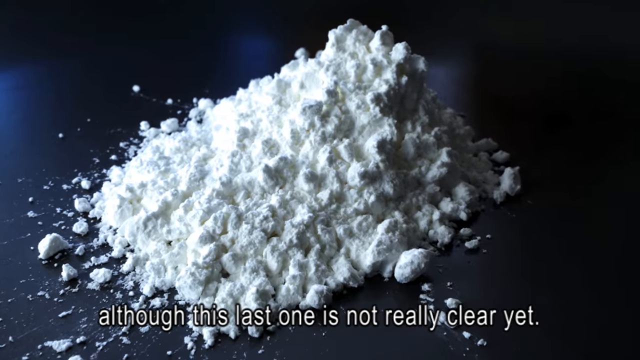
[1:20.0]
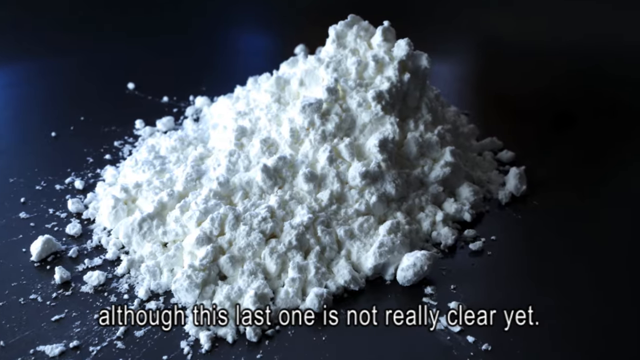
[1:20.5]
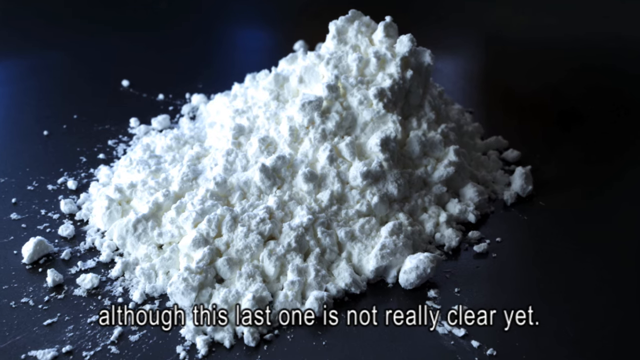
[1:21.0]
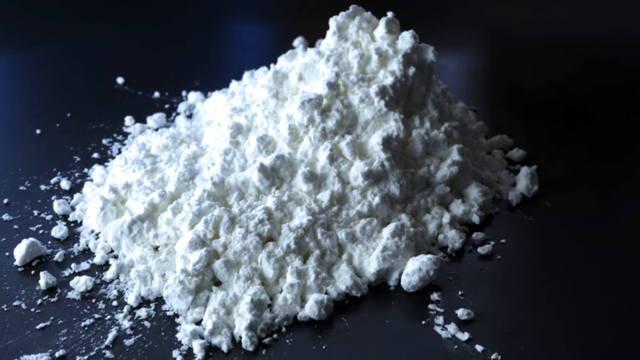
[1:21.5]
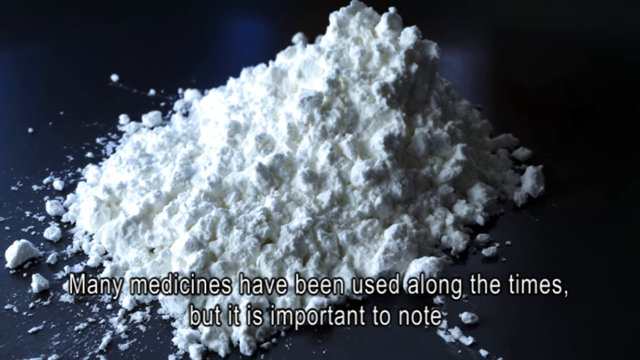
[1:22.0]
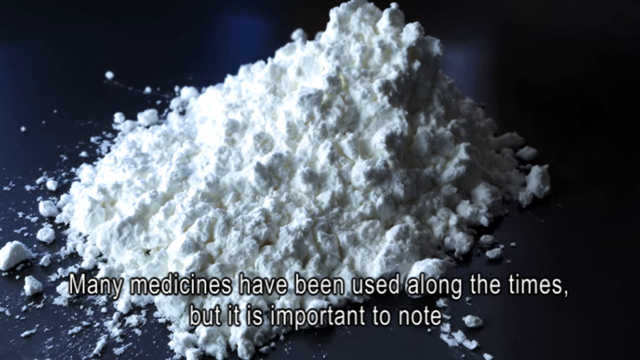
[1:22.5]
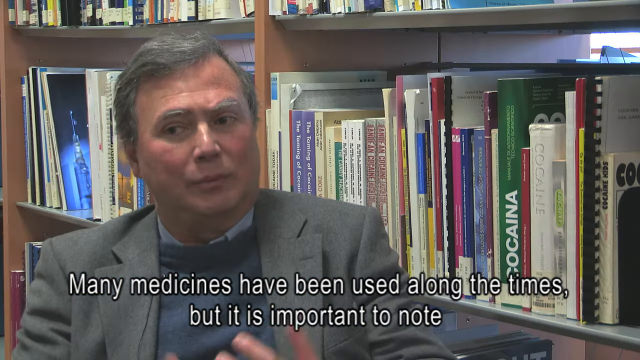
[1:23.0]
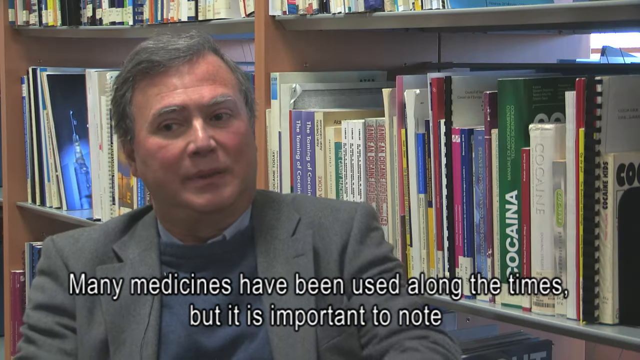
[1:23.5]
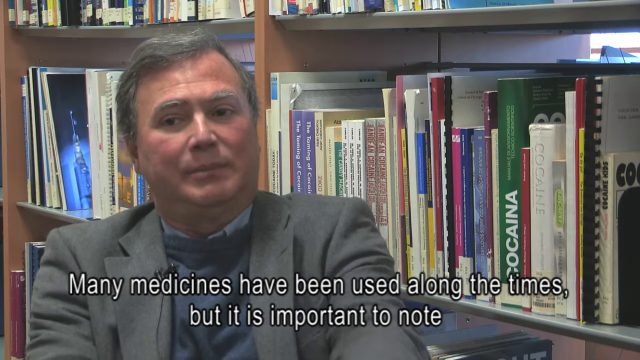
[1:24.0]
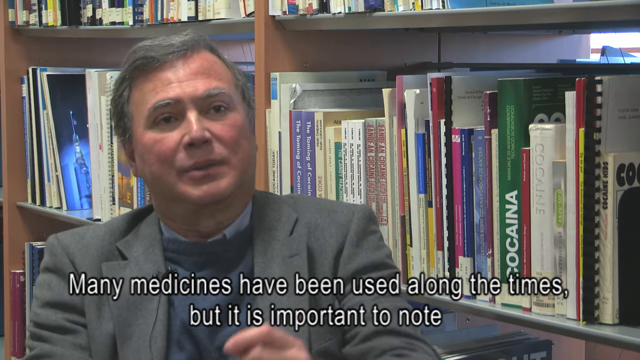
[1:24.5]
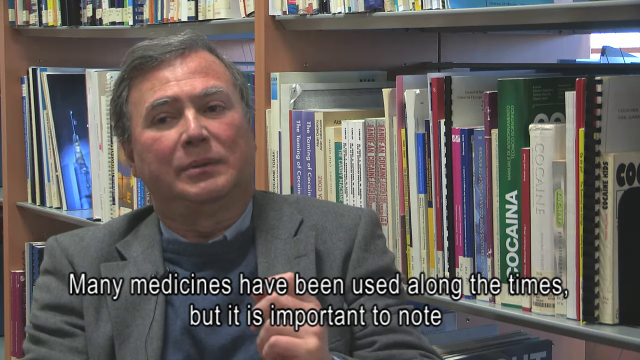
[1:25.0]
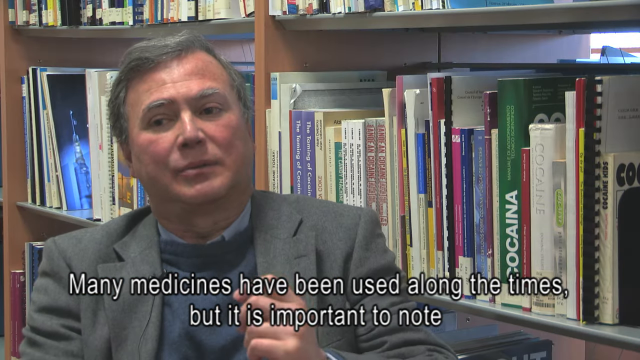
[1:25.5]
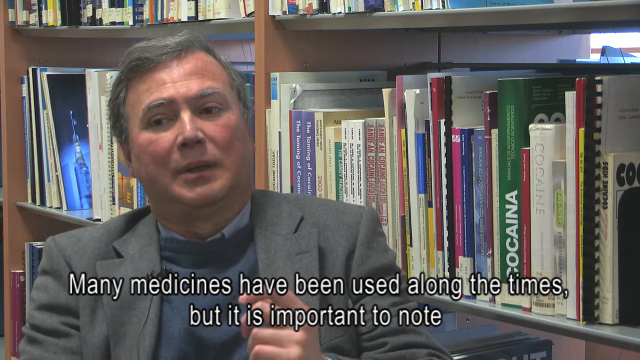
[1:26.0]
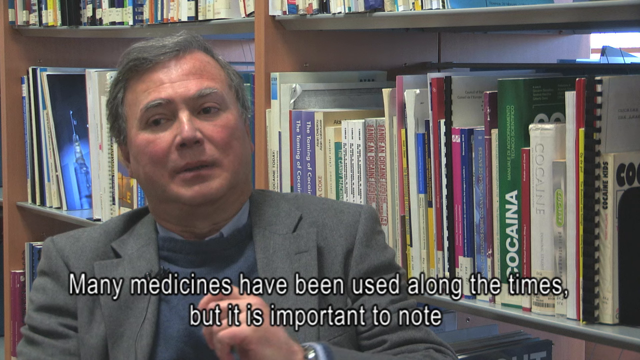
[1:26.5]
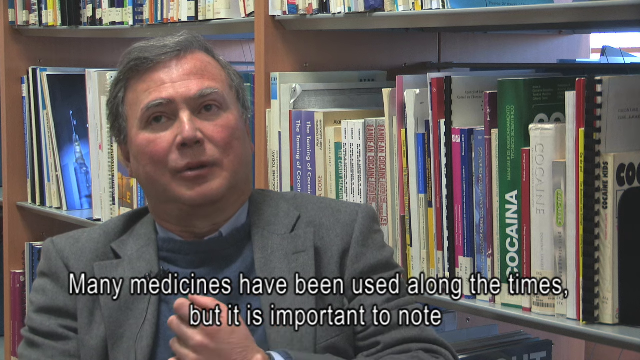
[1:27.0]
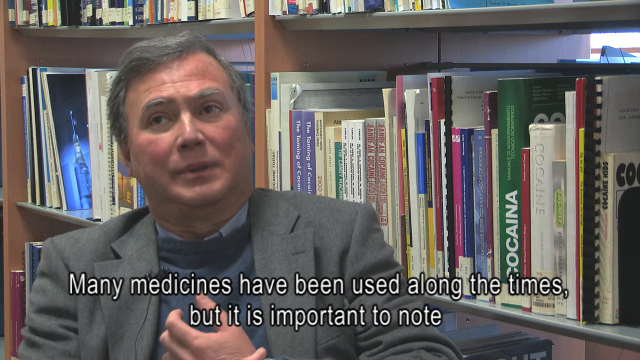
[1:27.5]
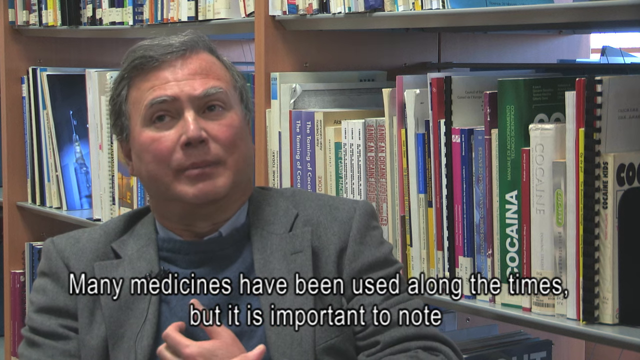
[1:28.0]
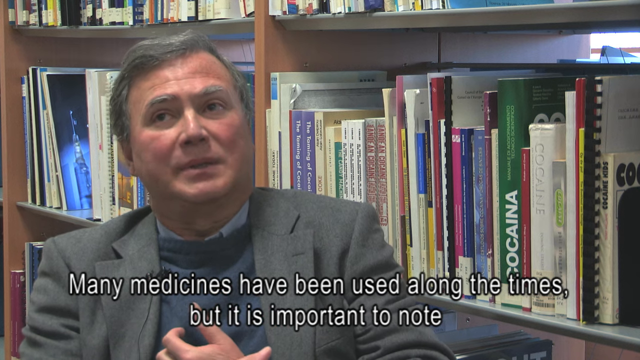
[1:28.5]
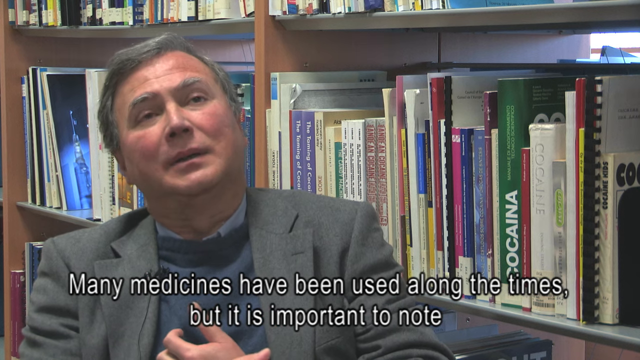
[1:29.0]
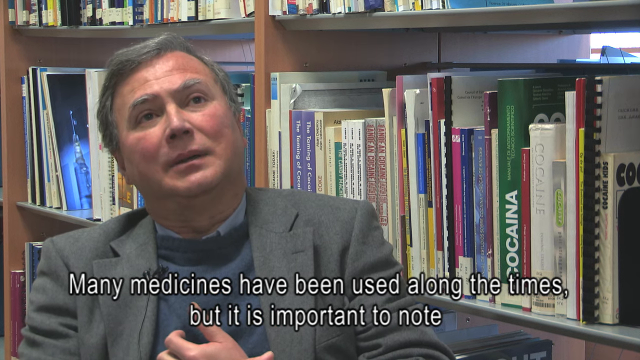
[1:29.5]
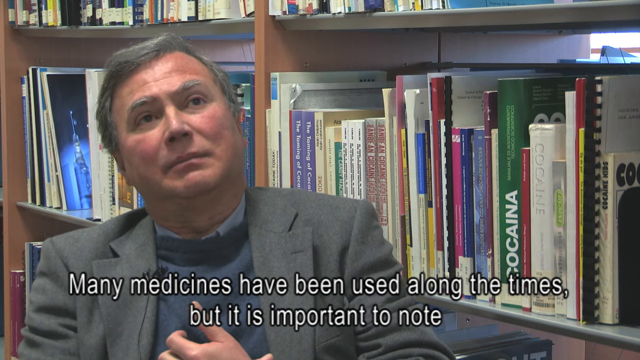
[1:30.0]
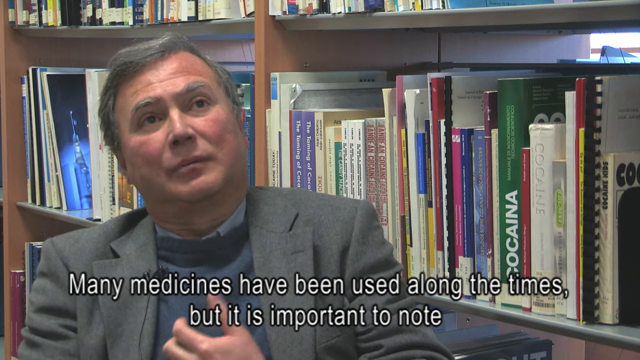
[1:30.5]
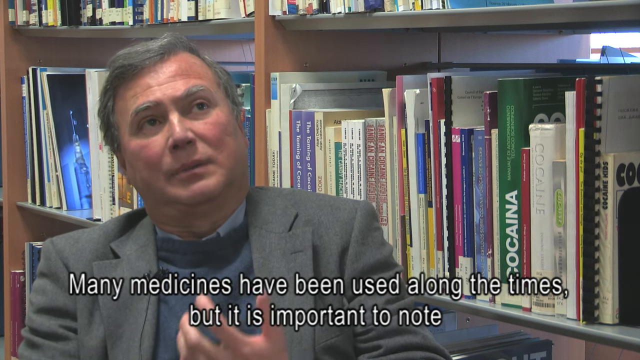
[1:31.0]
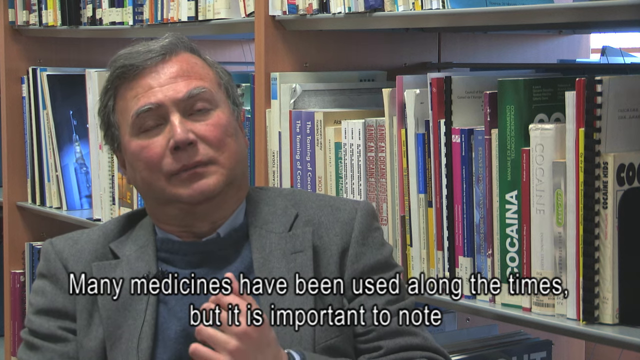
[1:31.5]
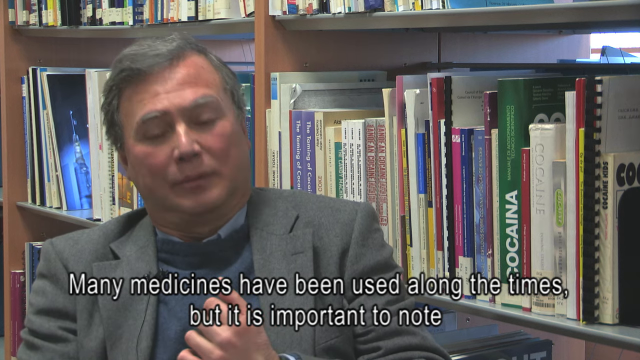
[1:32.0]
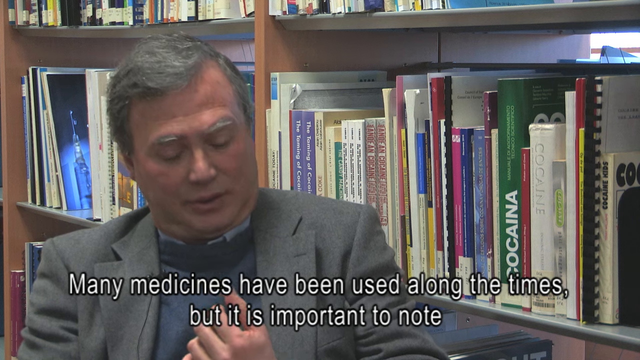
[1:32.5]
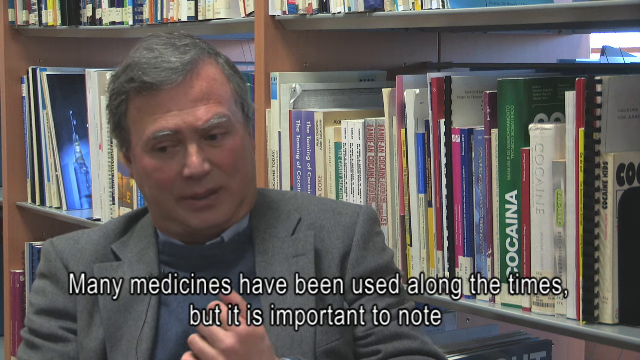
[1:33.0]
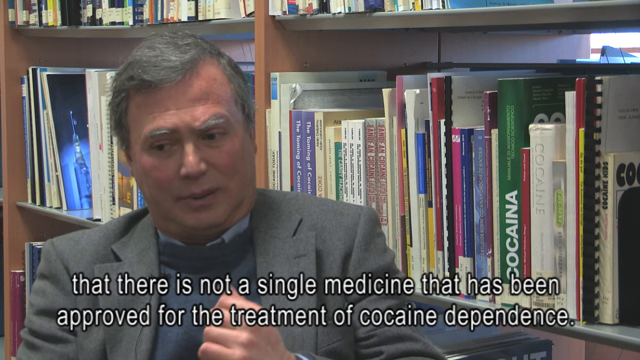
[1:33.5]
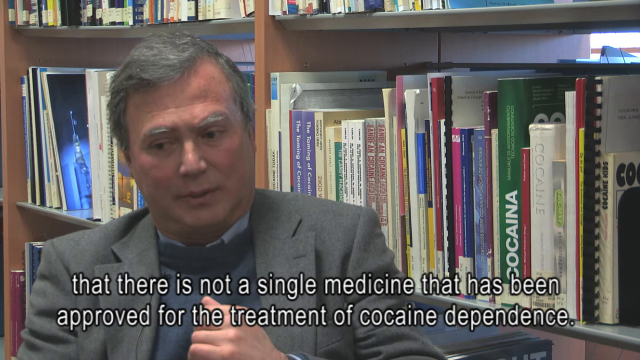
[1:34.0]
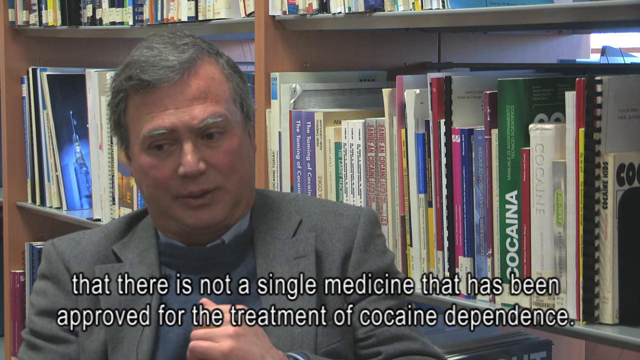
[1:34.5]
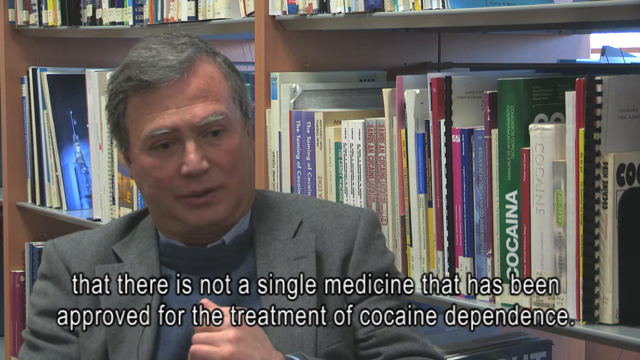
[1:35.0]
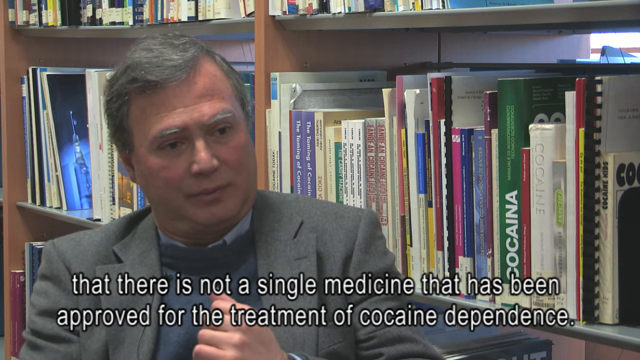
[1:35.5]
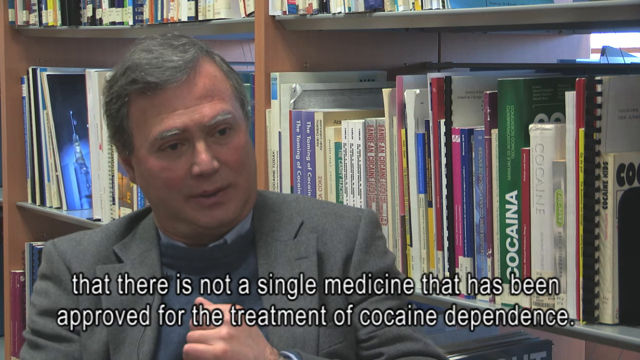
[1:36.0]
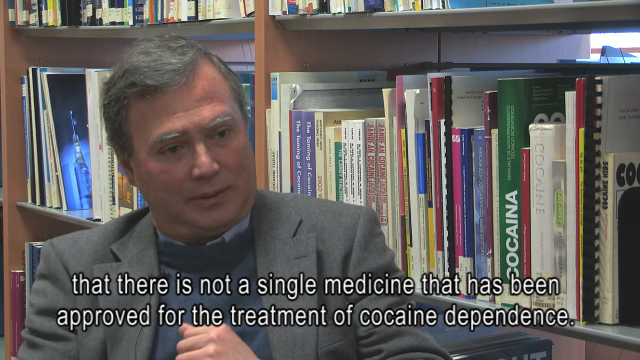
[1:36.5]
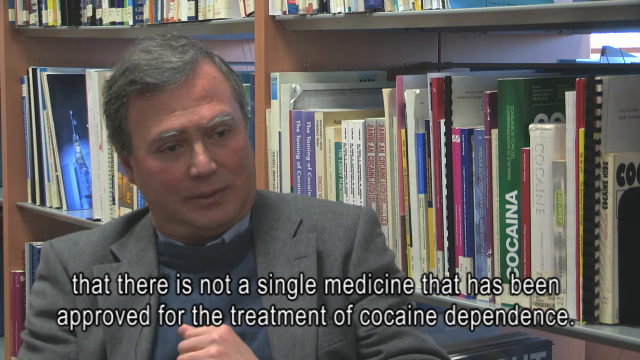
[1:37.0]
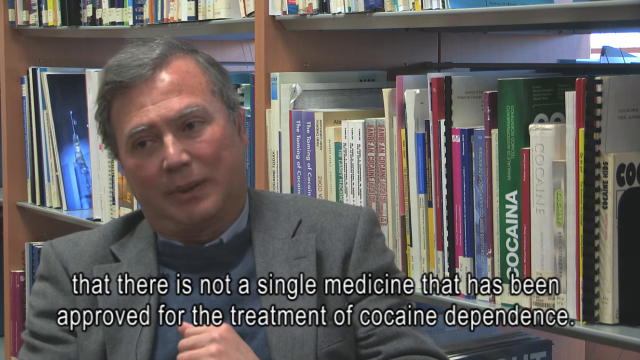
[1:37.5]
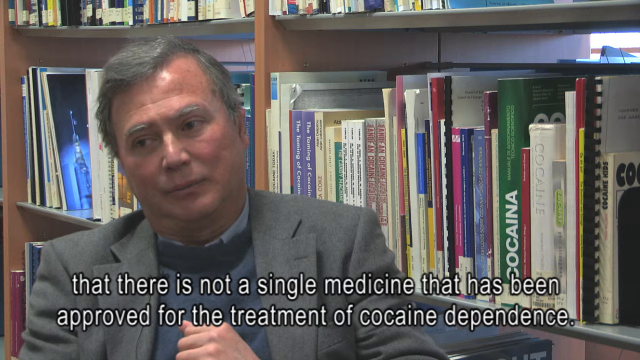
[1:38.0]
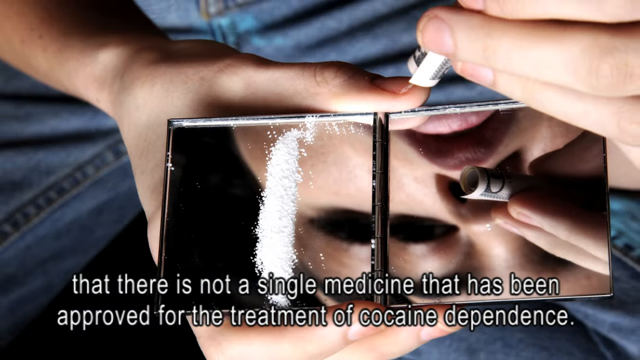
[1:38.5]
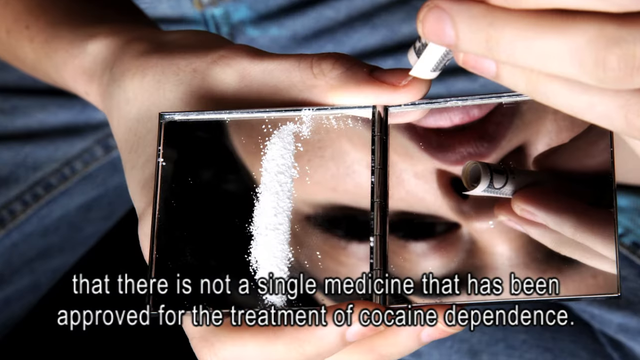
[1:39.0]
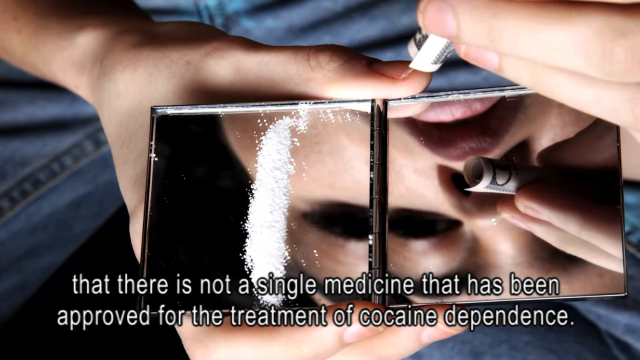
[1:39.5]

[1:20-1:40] A big pile of white powdery substance is shown. The psychiatrist appears again, sitting in front of a bookshelf full of books, apparently his personal library, maybe in his office; he wears his sport jacket, a sweater and a dress shirt, has a short businessman's haircut, and is probably in his late 50s or maybe 60s. A little mirror shows a line of cocaine, and it looks like someone cut the cocaine into a line, probably to sniff it, though the sniffing is not shown. A picture of a big pile of white, puffy substance, presumably cocaine, is shown and stays on screen.